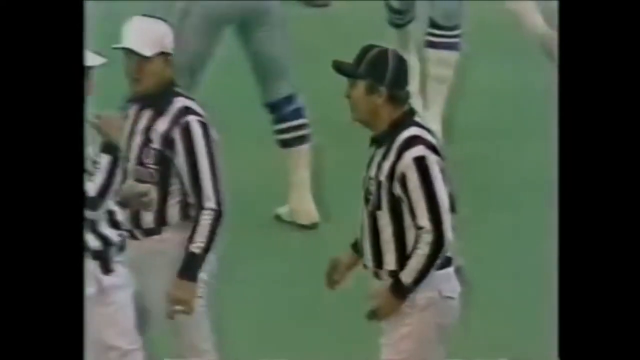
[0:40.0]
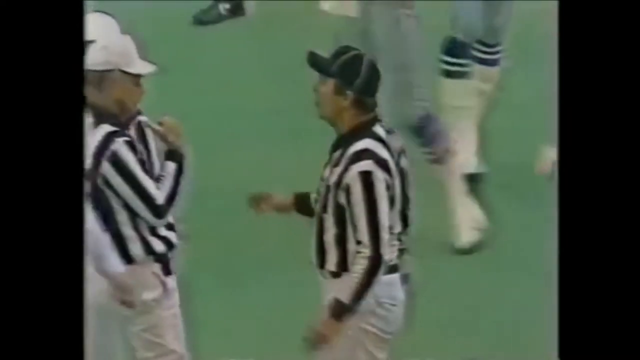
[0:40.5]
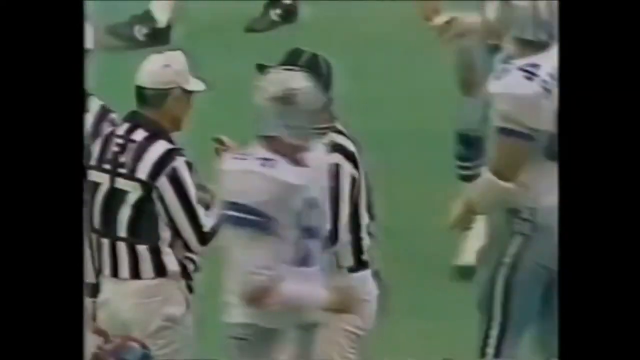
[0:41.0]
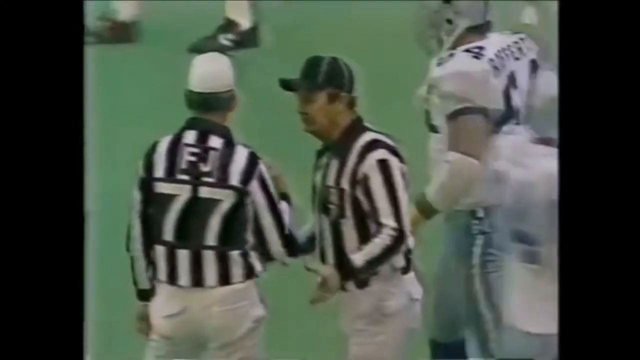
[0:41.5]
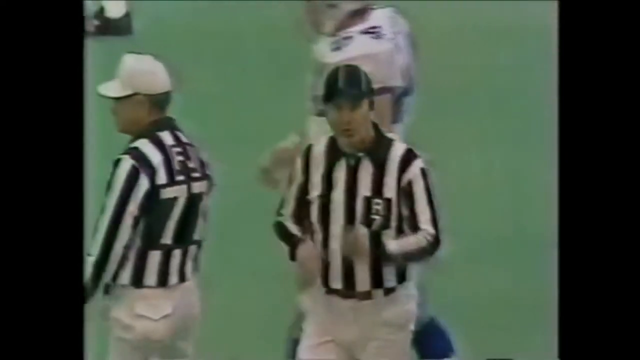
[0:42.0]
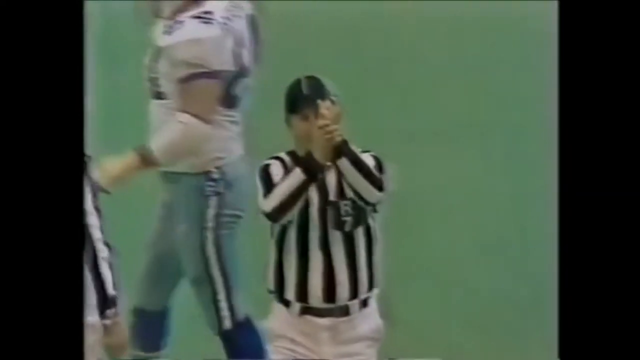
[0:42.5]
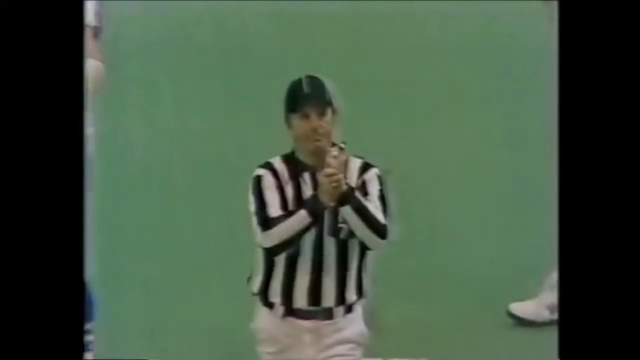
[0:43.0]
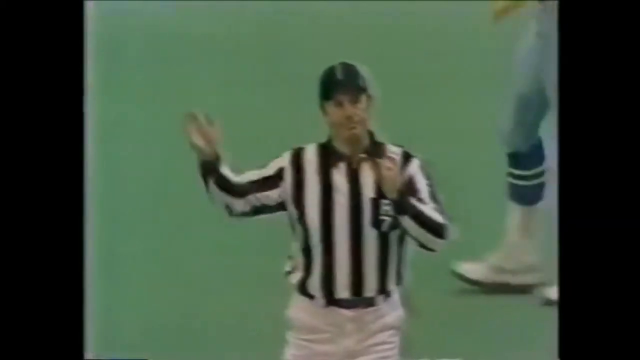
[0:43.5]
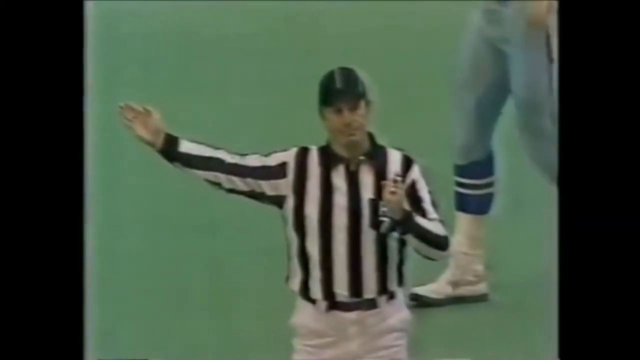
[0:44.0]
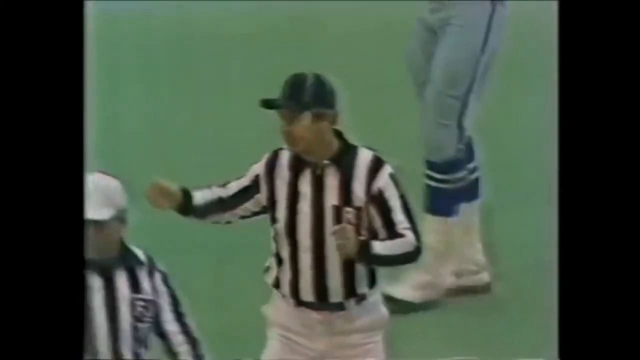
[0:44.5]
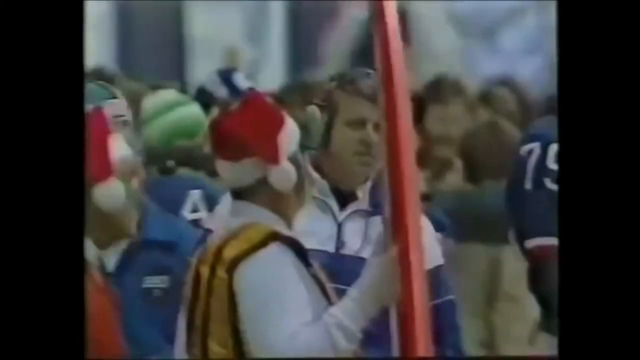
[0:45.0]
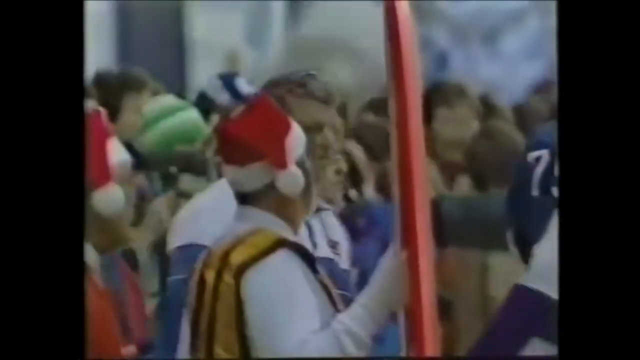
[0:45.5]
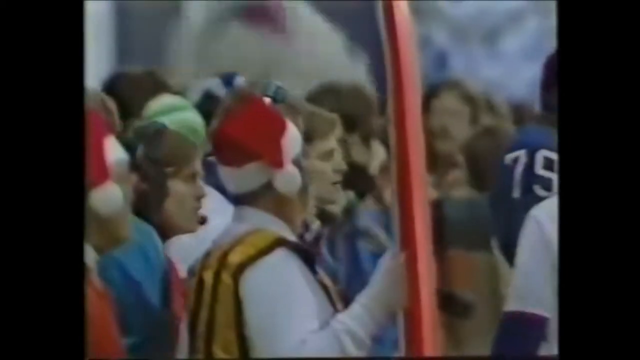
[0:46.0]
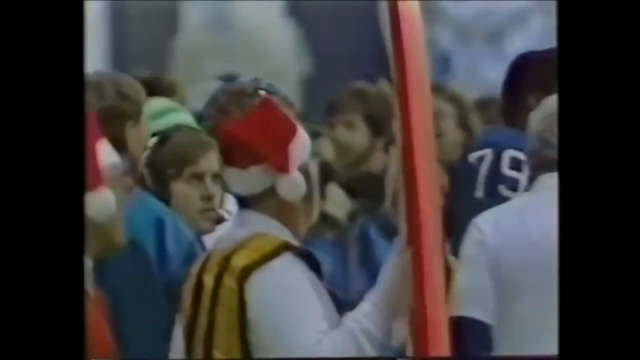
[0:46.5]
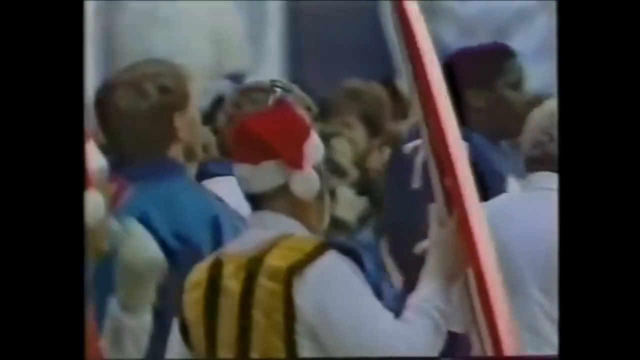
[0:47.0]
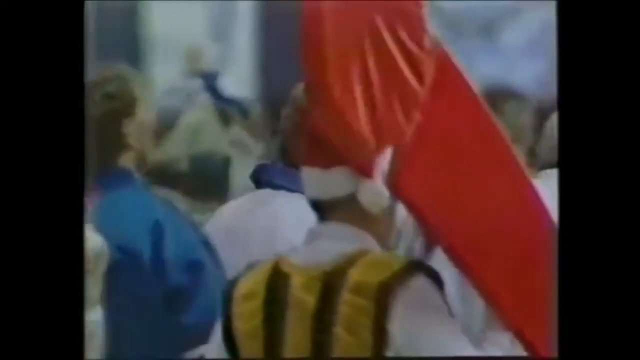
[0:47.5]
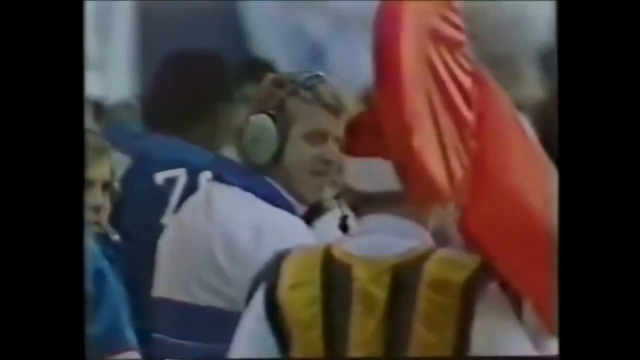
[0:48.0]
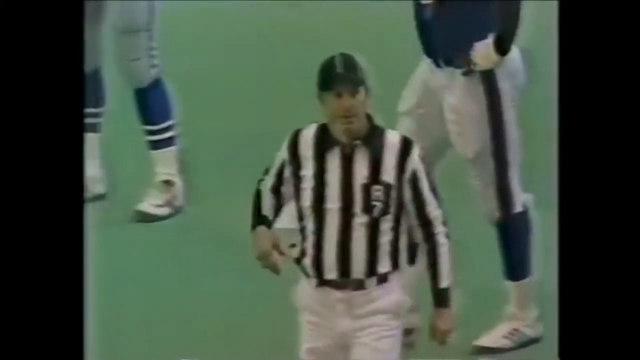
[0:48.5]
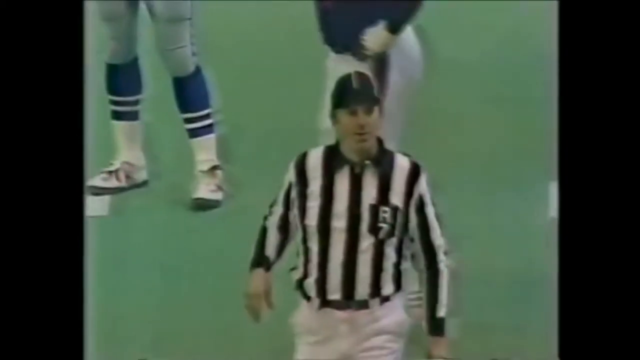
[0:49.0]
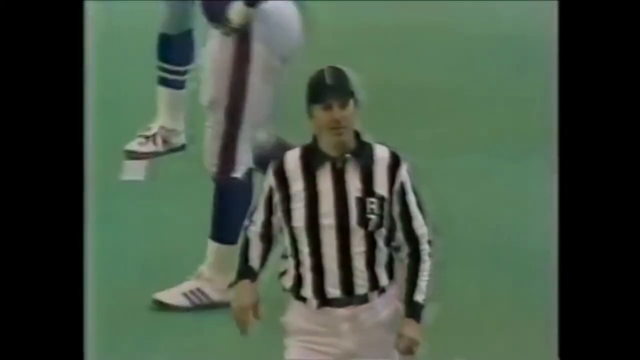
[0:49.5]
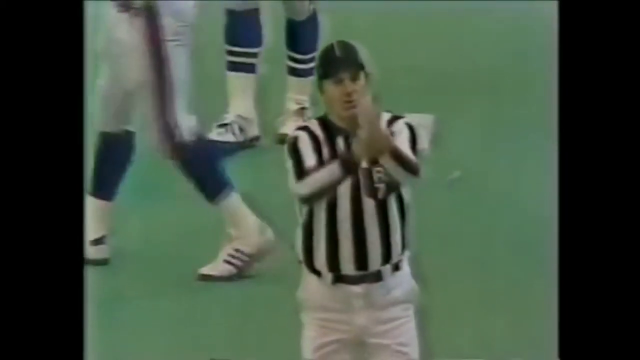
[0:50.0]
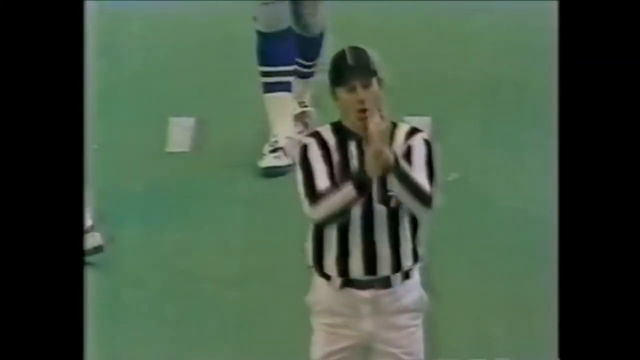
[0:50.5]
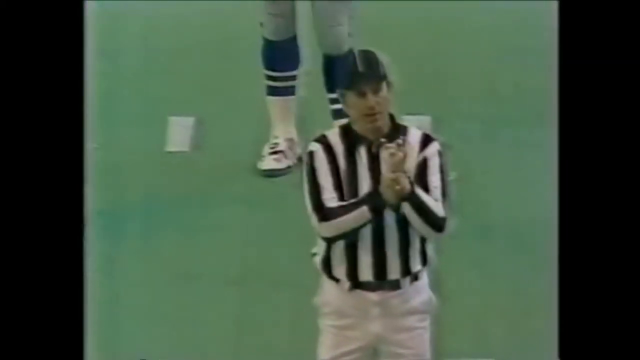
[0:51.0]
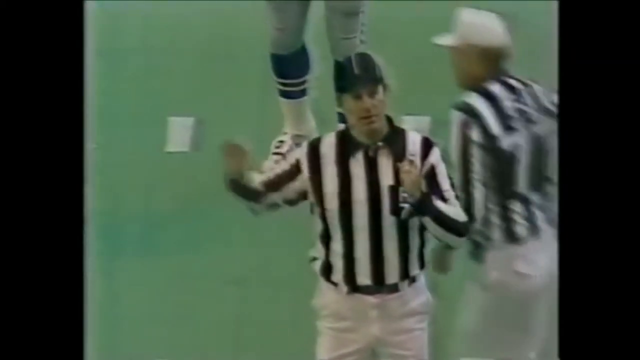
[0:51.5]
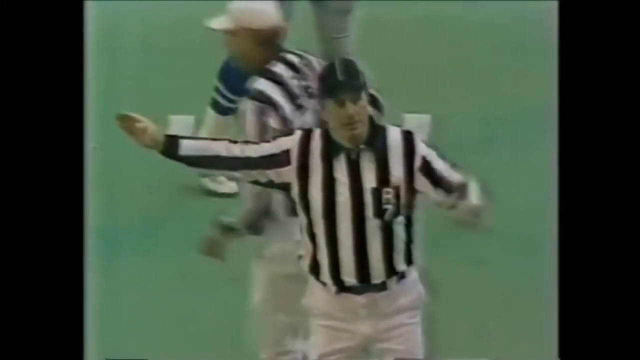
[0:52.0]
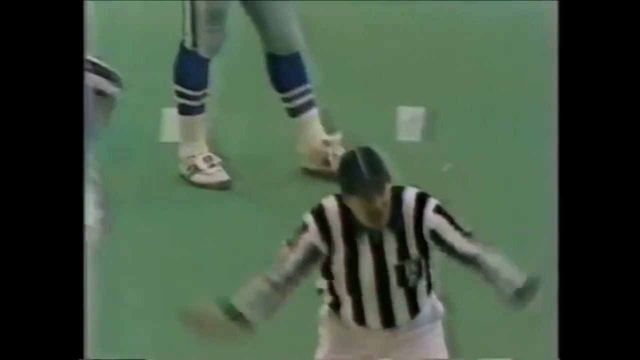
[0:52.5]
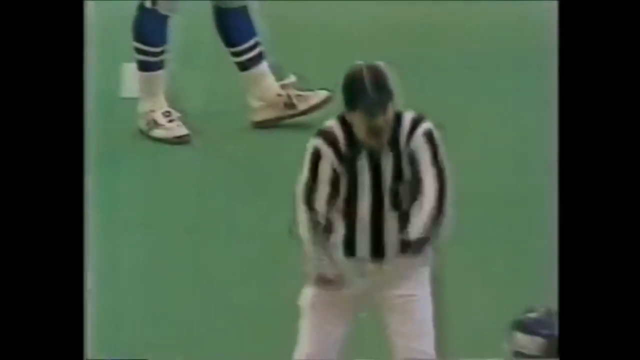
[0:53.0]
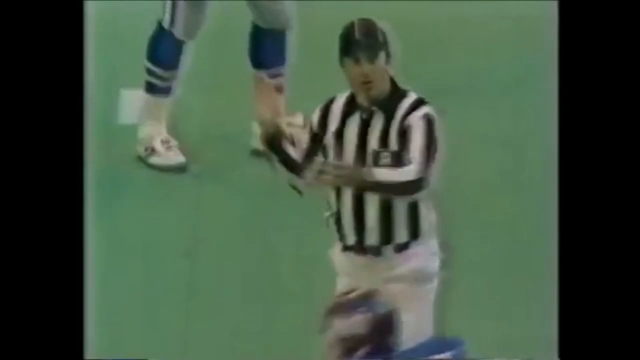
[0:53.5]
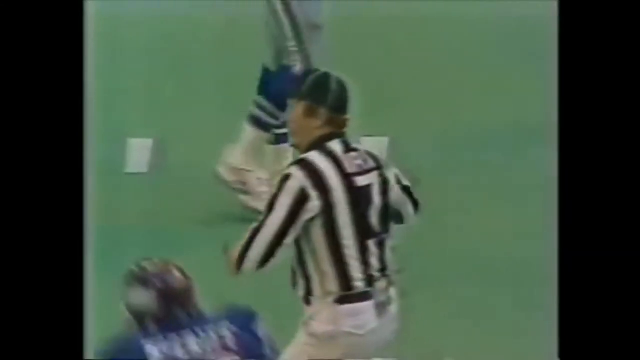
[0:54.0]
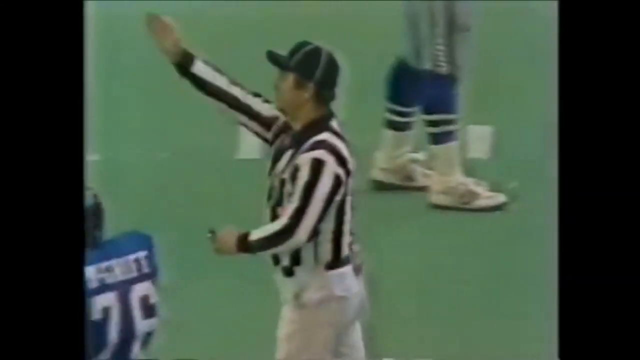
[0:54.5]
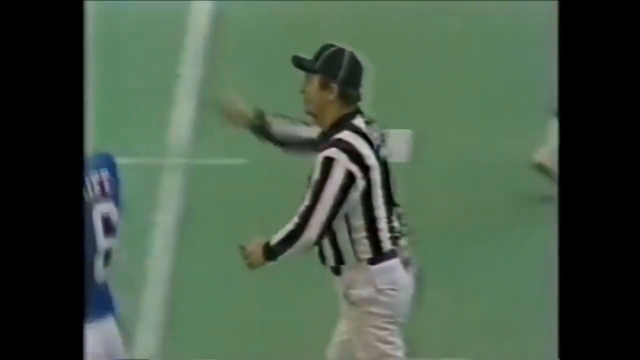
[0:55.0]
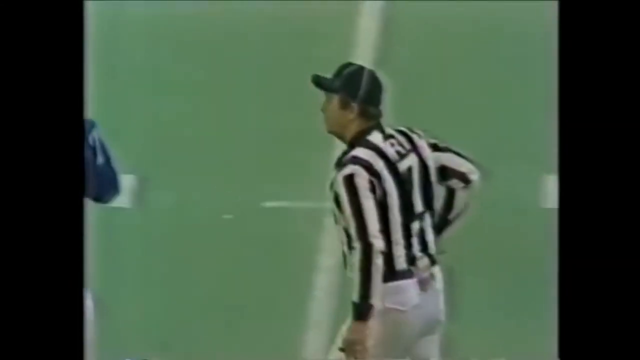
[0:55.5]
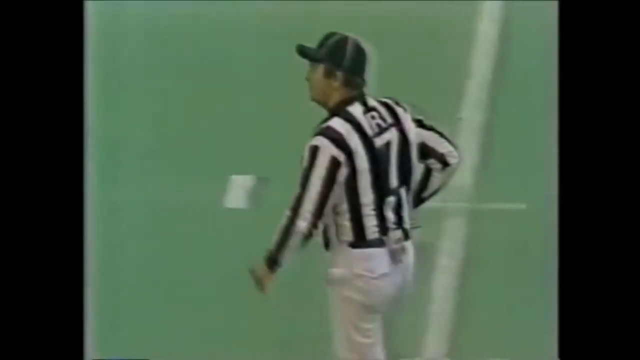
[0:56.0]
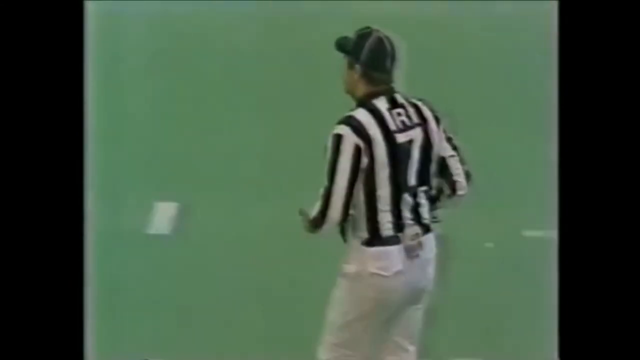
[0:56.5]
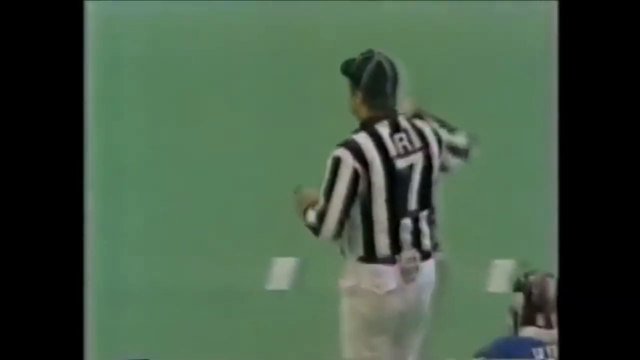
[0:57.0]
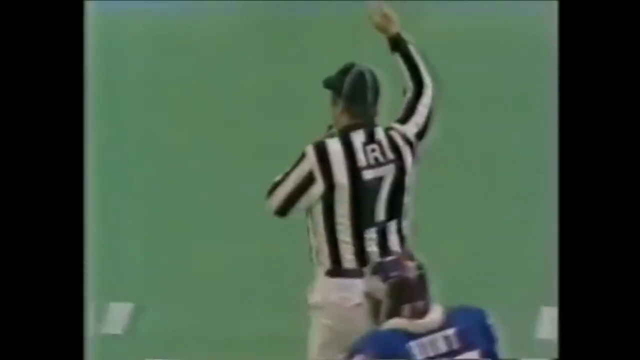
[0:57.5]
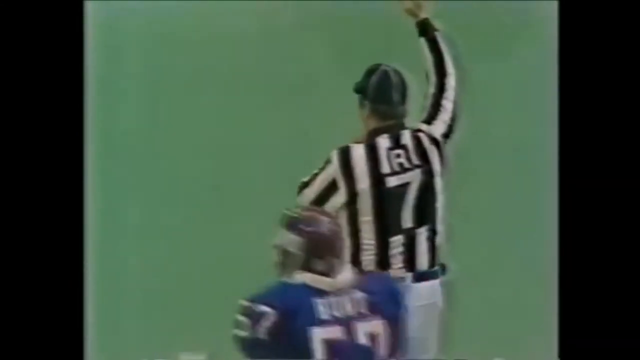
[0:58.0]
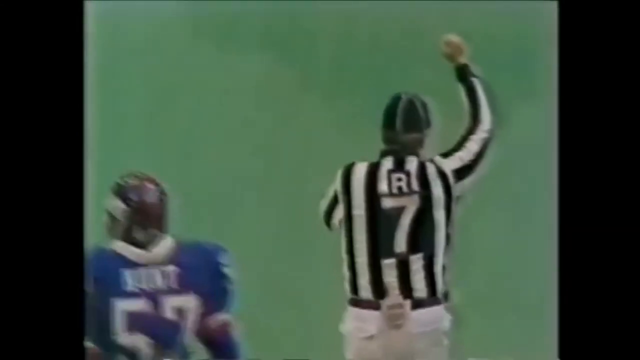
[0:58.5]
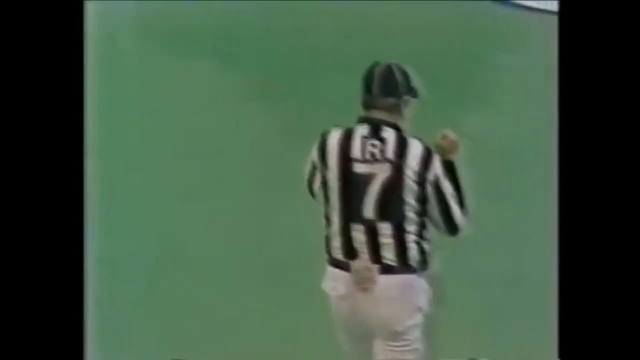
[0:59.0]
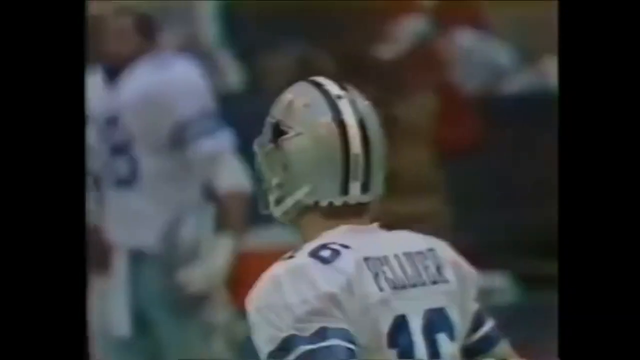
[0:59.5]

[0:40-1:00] Vintage footage from an NFL game appears, of very poor quality: kind of dark, faded looking and grainy, probably a football game from the 70s. One team on the field is the Dallas Cowboys, in light white uniforms with blue detailing; the opposing team wears dark jerseys, probably navy blue, with white detailing. The first scene shows three referees, one in a black cap and two in white caps, all wearing the same long-sleeved black and white striped shirts and white pants. One referee has the letters FJ and the number 77 on his back; another has R and the number 7. These two confer, and then the referee marked R7 makes a motion, making a ruling on the field. The video cuts to the sidelines, where someone wearing a red and white Santa hat holds up a red sign. Then the same R7 referee is seen again making hand movements; he holds his hand up and blows his whistle.